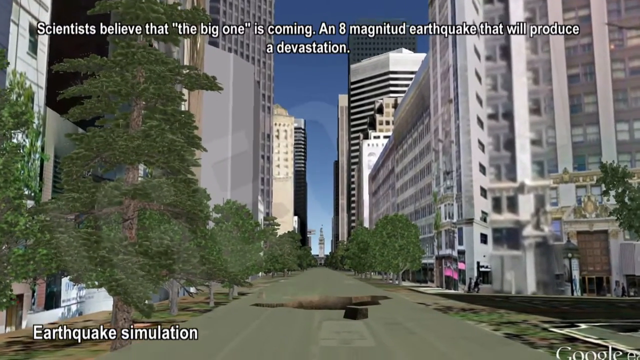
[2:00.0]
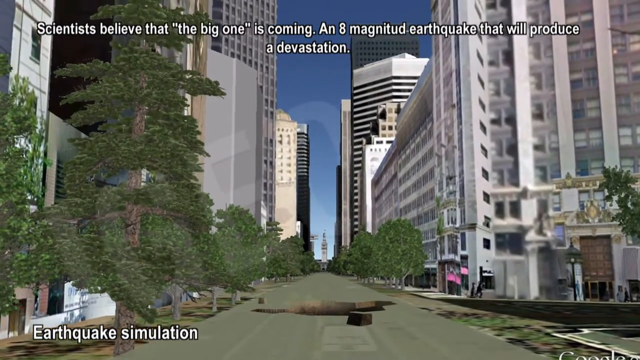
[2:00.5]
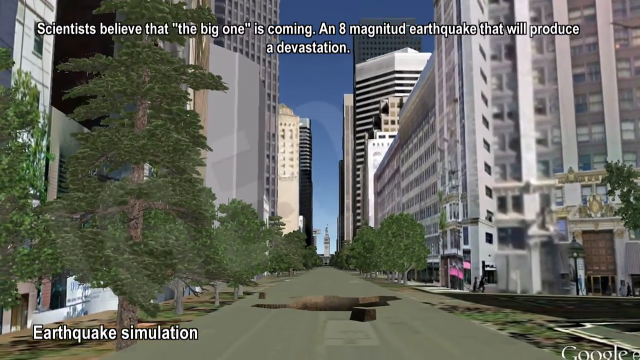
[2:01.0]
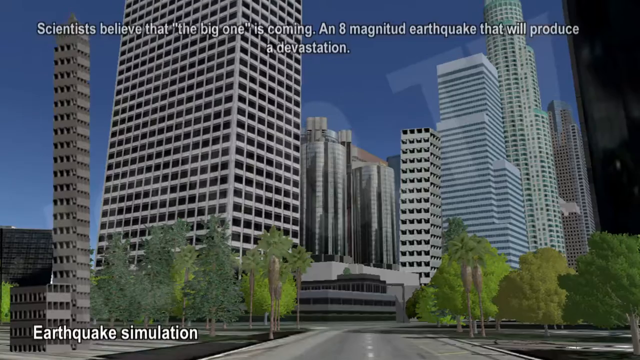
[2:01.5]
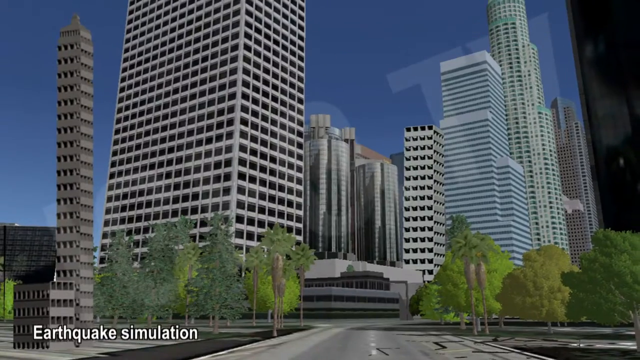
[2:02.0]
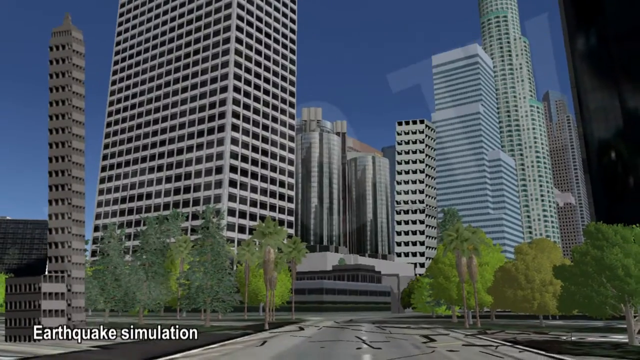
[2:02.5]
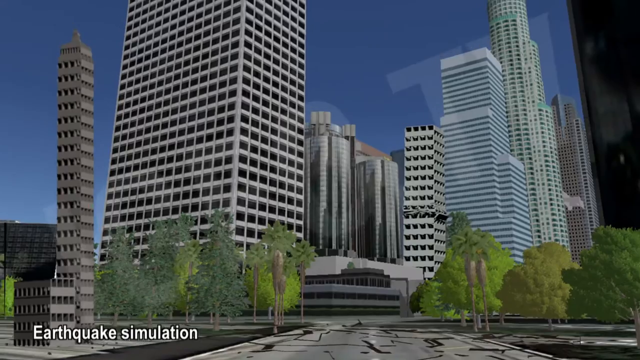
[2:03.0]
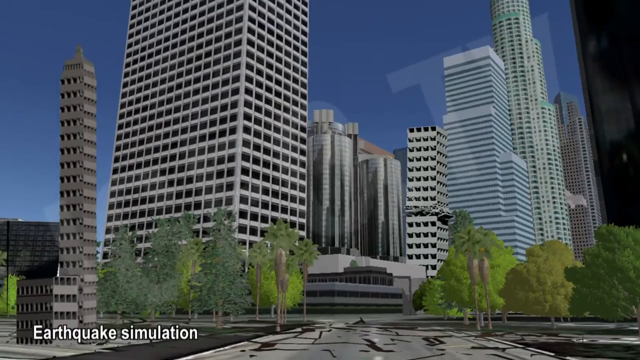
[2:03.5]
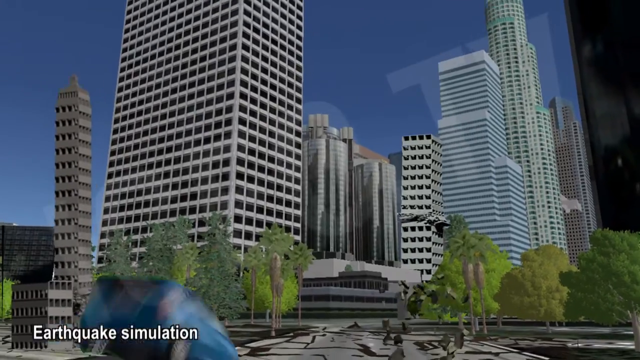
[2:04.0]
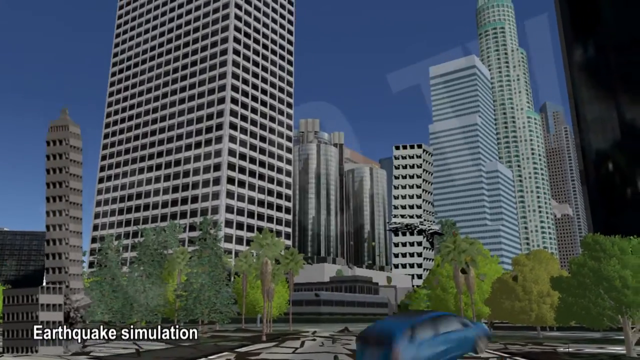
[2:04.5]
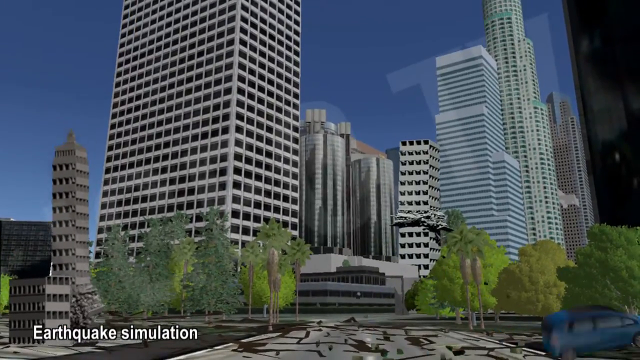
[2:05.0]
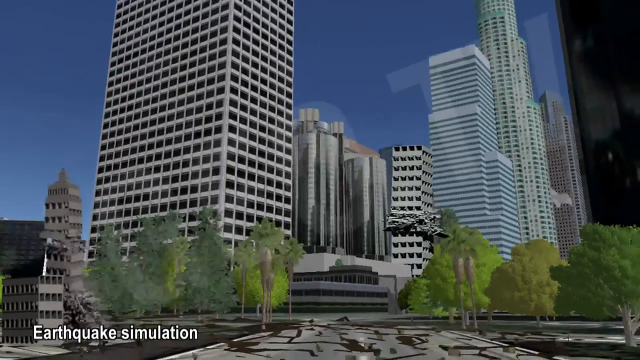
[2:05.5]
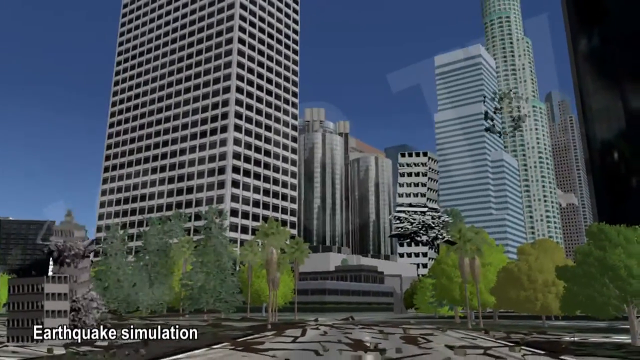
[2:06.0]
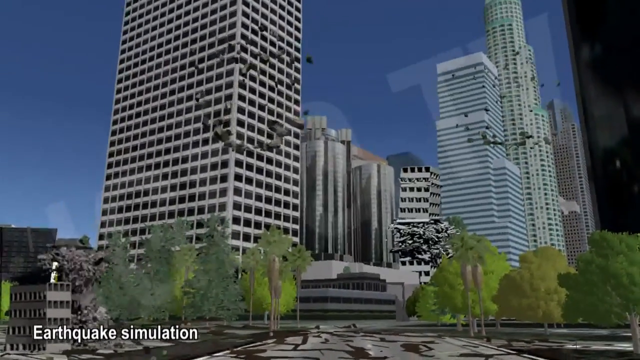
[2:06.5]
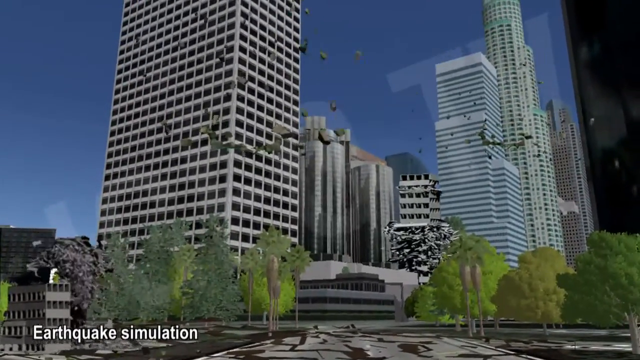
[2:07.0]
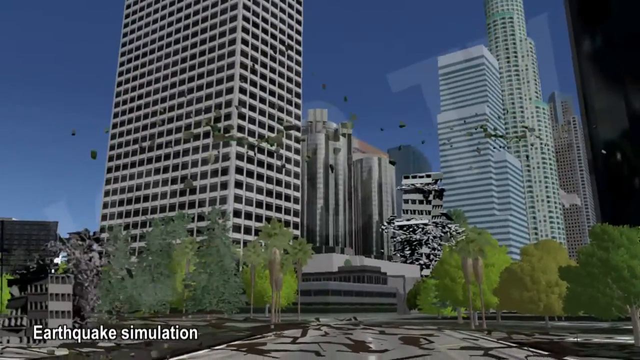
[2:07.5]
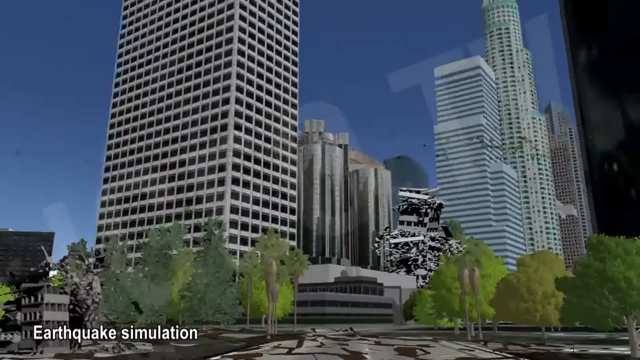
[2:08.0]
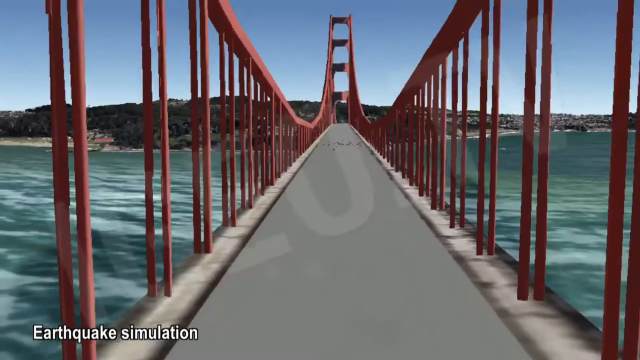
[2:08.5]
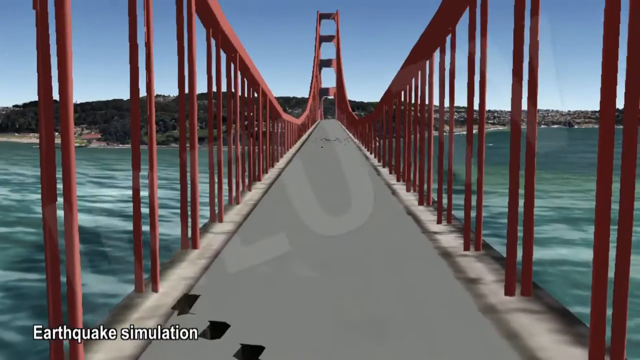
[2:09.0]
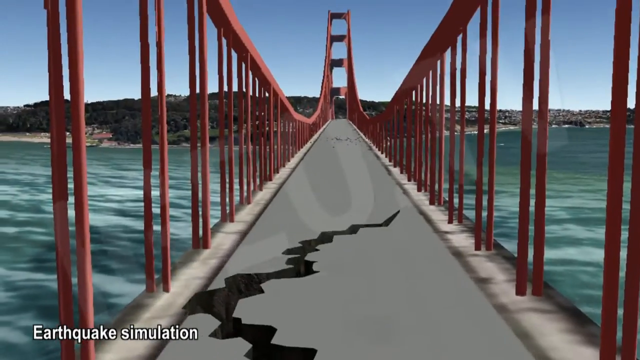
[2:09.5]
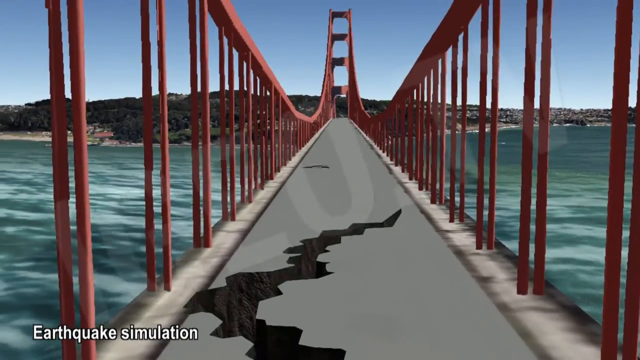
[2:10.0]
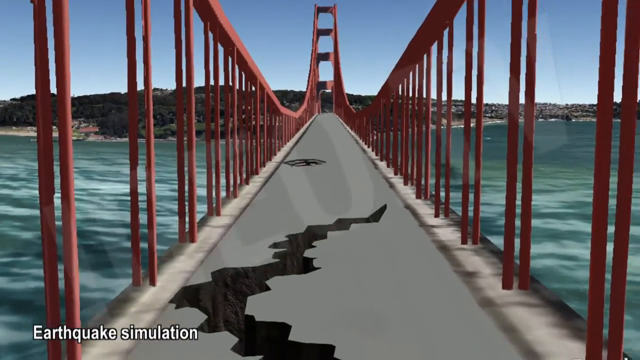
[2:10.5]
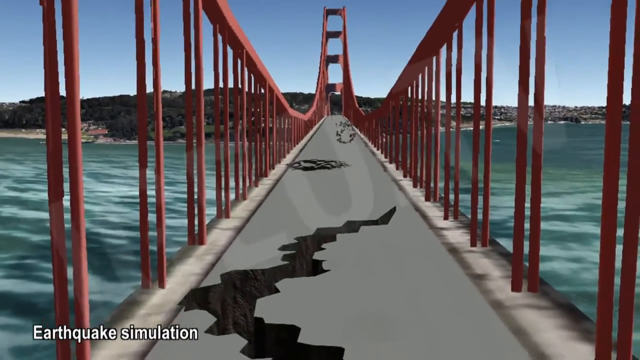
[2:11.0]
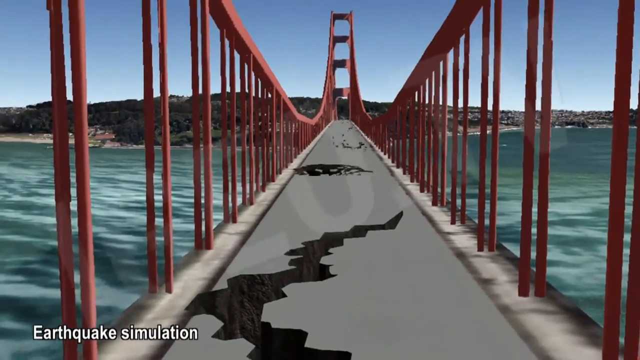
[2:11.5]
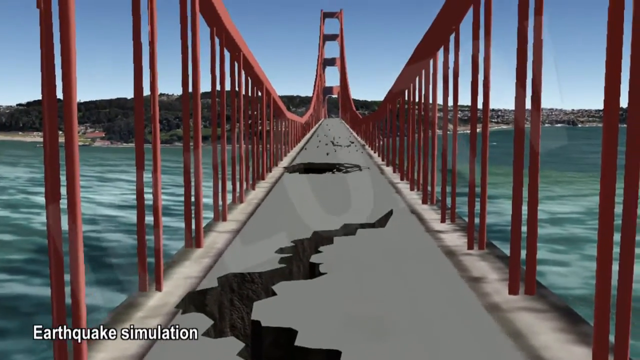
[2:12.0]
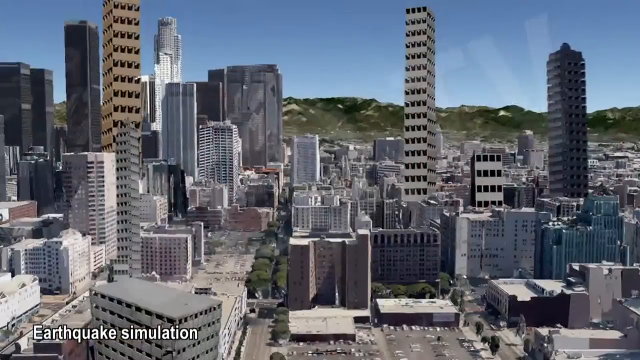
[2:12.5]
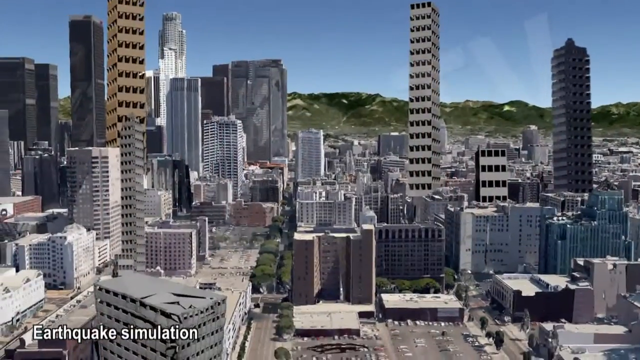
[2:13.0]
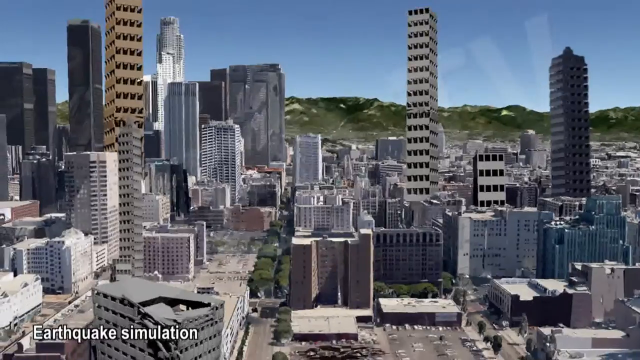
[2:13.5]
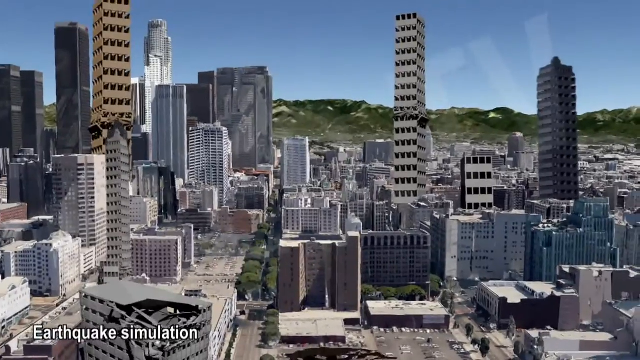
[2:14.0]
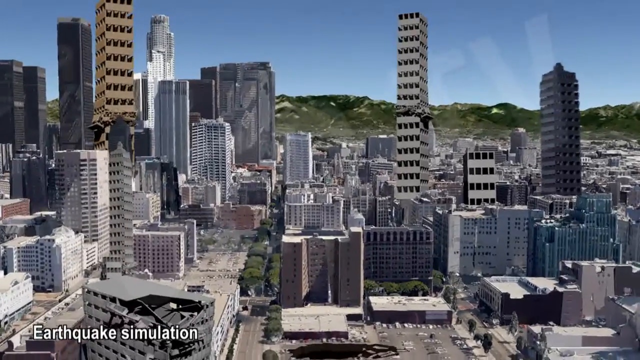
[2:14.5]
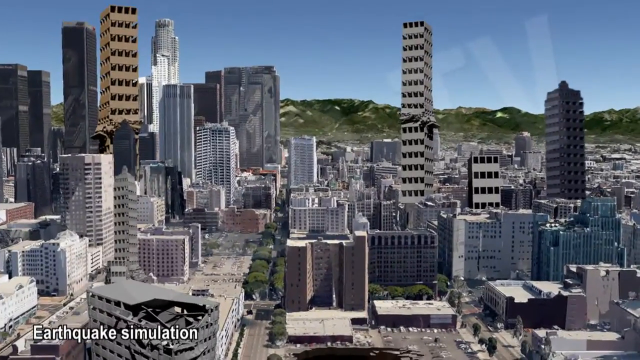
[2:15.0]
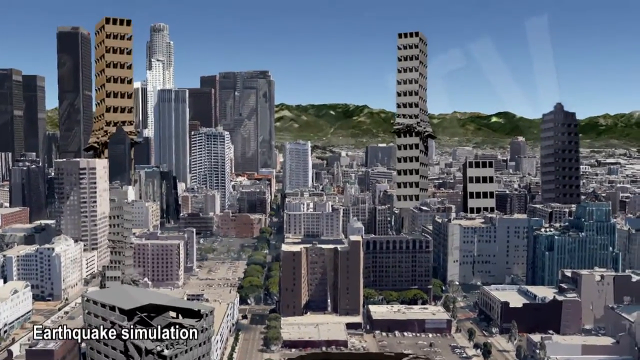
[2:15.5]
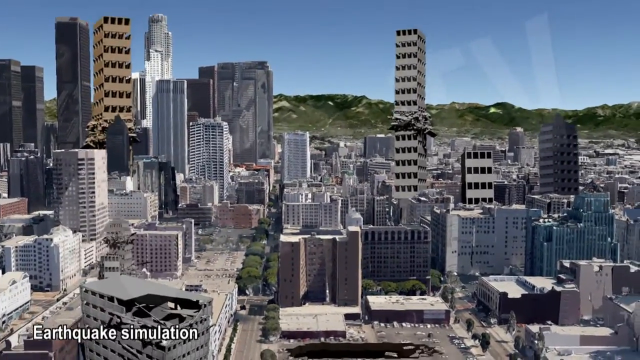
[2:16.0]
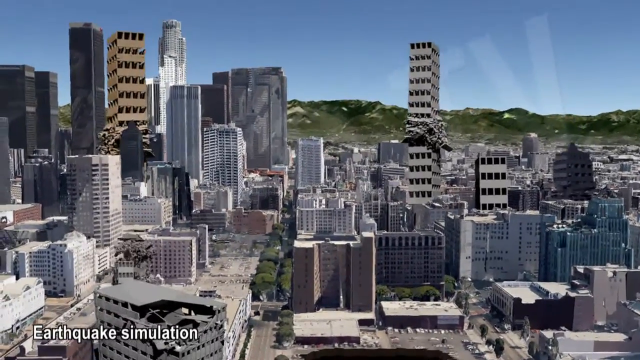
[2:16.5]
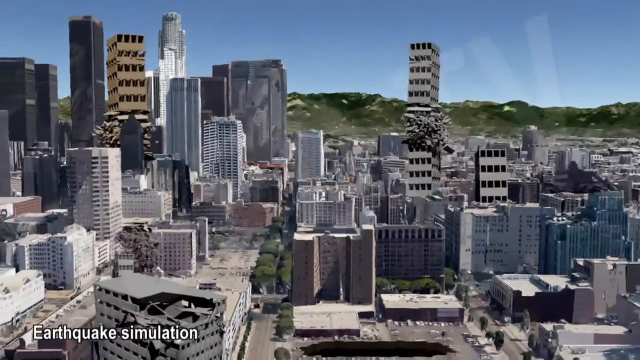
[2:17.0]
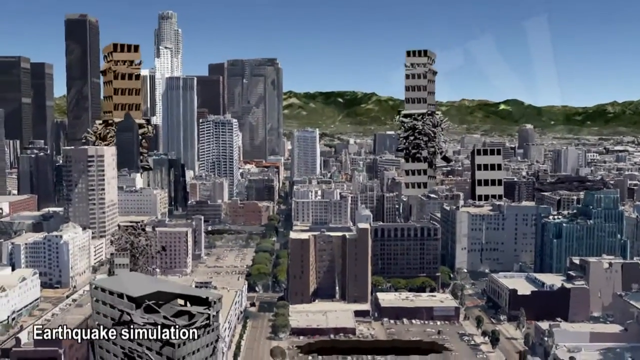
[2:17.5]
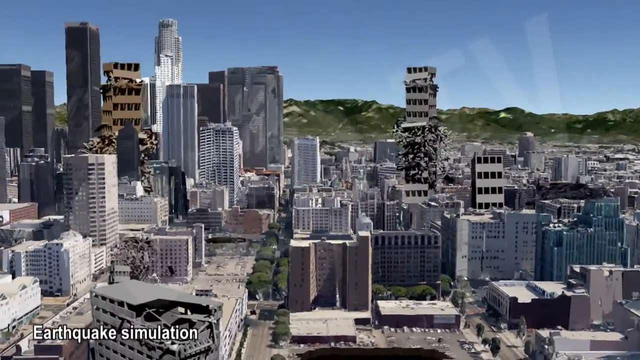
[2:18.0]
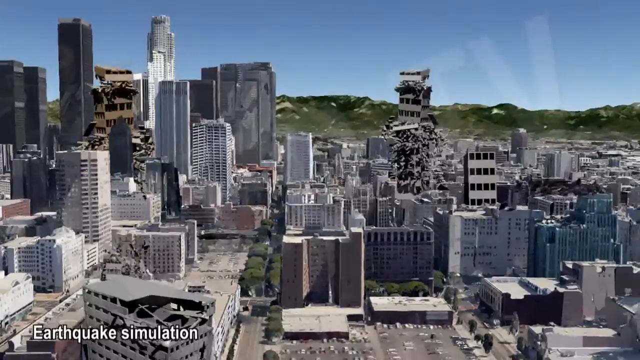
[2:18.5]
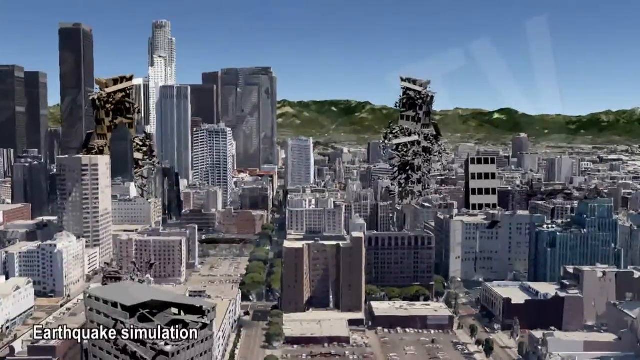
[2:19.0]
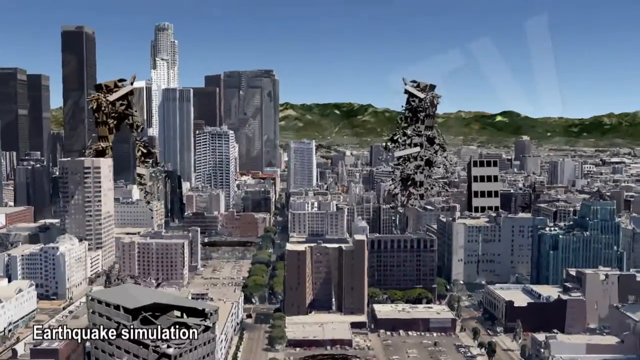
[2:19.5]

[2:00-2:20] Text says scientists believe that the big one is coming, and an earthquake simulation is shown that looks like Grand Theft Auto. The Bonaventure Hotel appears, and the county courthouse goes down. The San Francisco bridge is shown falling apart and cracking, then the Transamerican building, in San Francisco, is about to go down, with the big skyscrapers coming down.